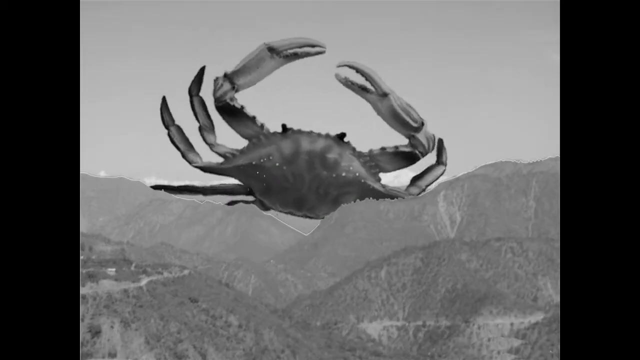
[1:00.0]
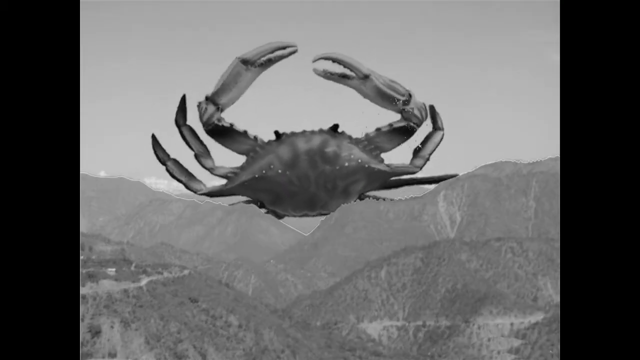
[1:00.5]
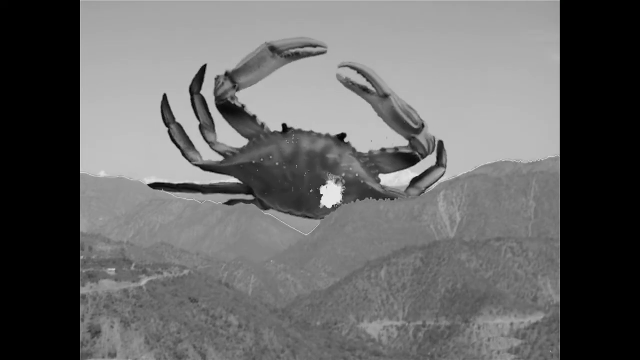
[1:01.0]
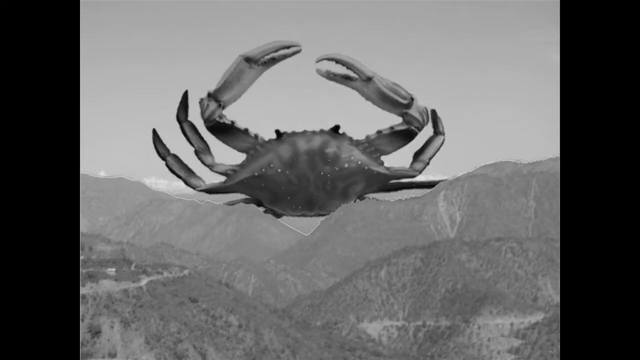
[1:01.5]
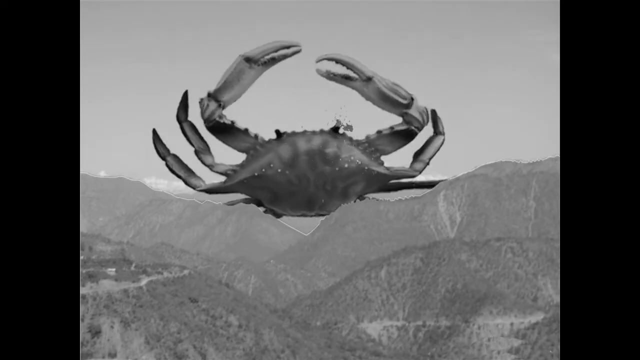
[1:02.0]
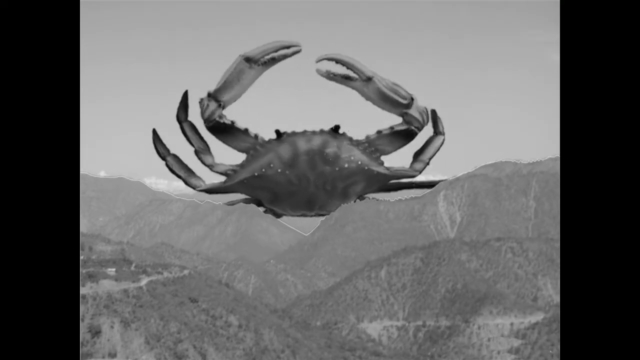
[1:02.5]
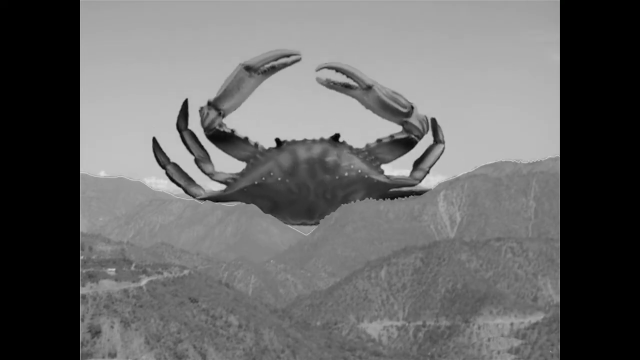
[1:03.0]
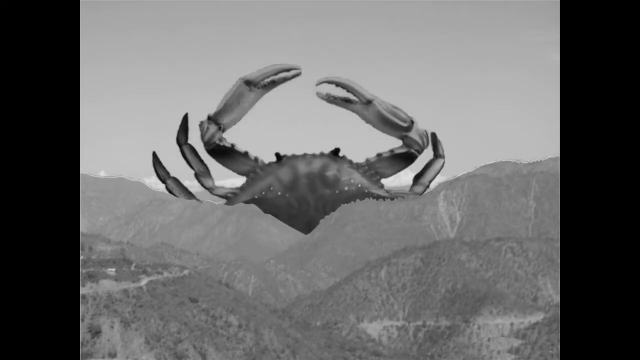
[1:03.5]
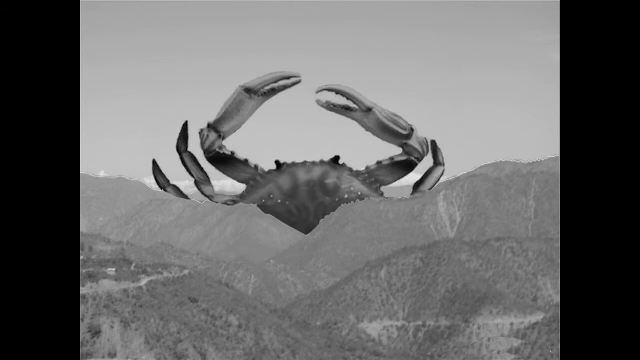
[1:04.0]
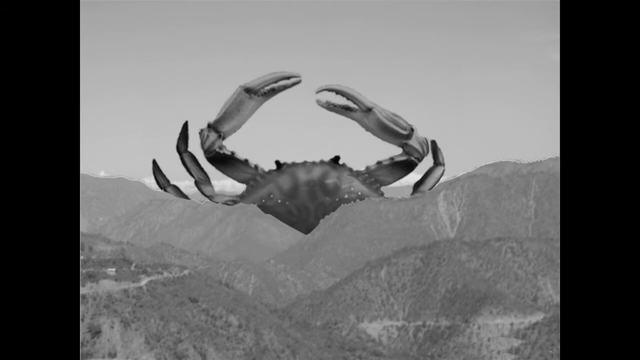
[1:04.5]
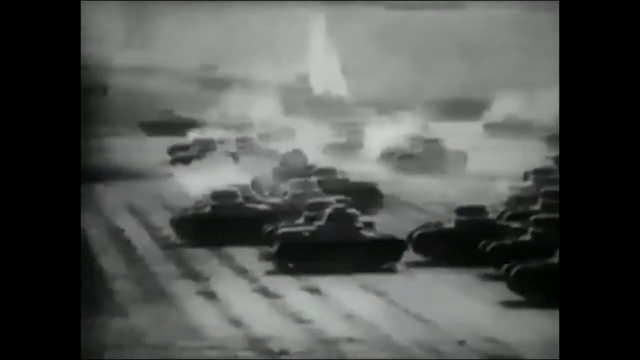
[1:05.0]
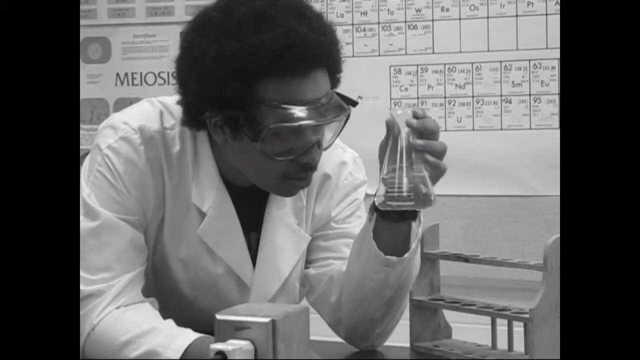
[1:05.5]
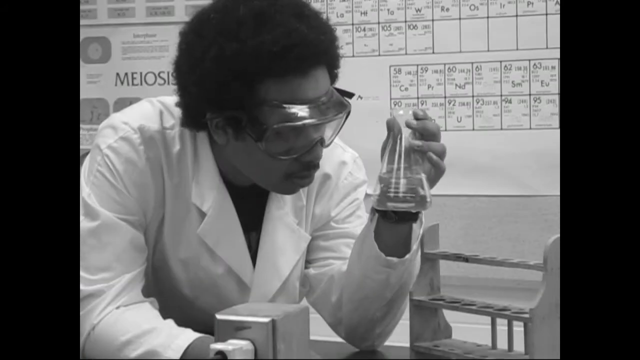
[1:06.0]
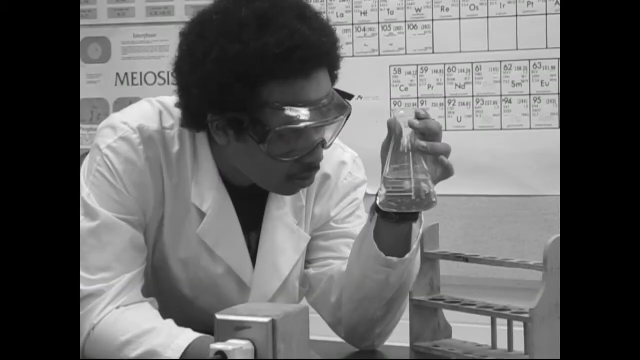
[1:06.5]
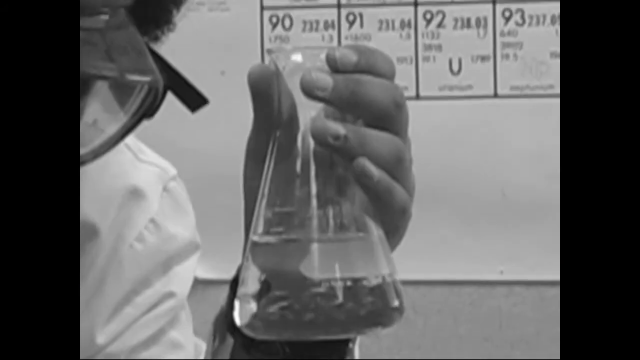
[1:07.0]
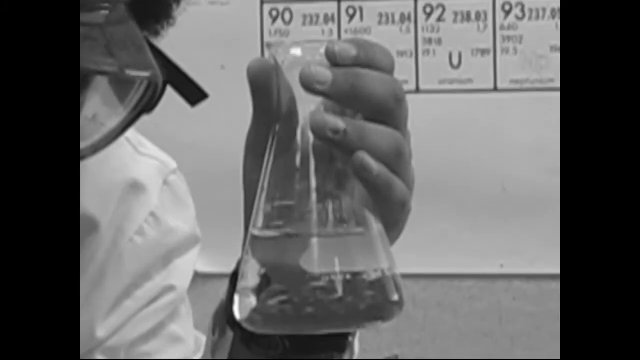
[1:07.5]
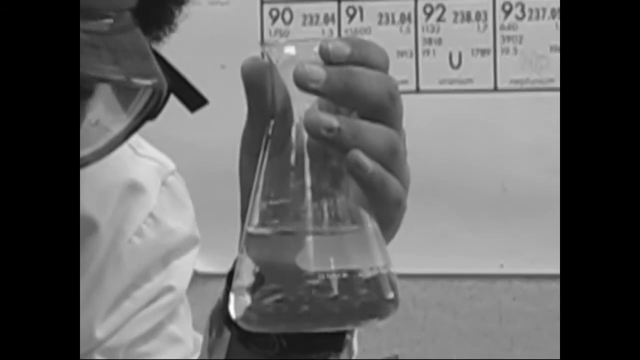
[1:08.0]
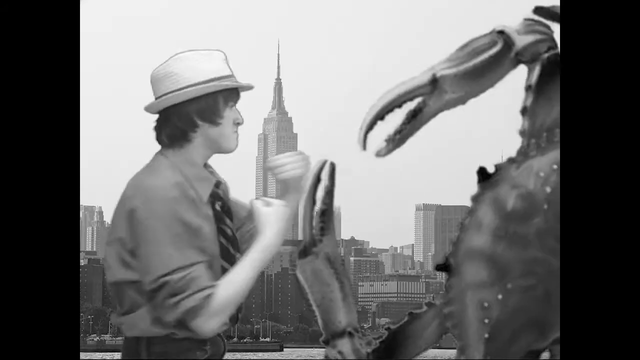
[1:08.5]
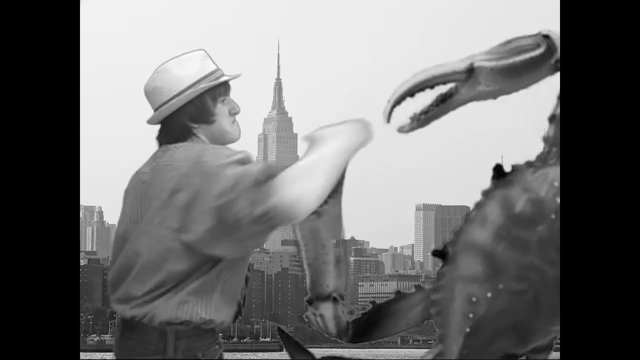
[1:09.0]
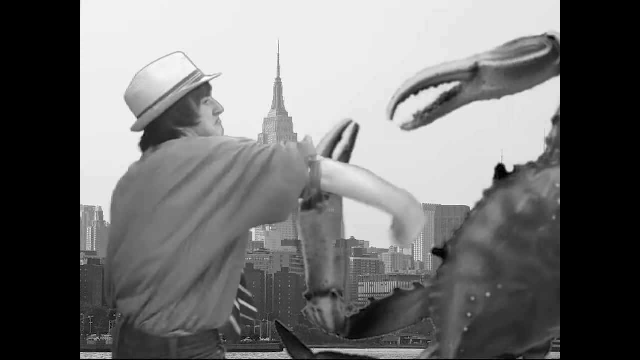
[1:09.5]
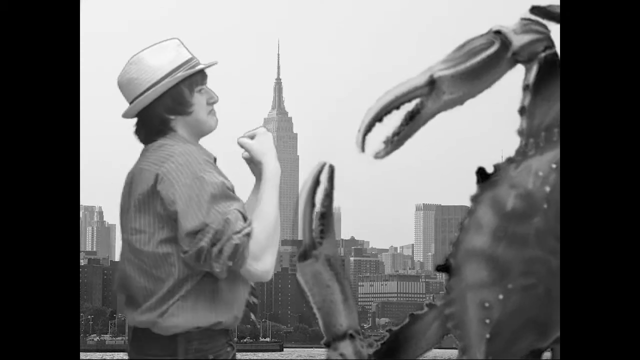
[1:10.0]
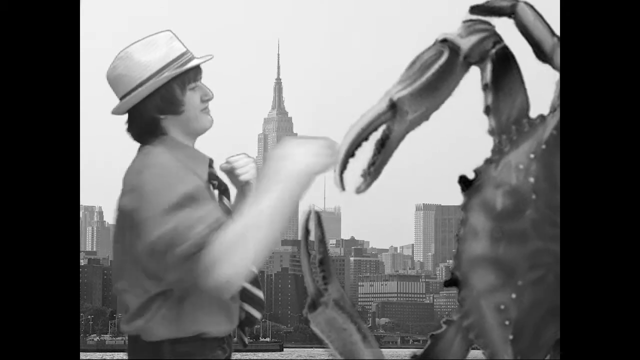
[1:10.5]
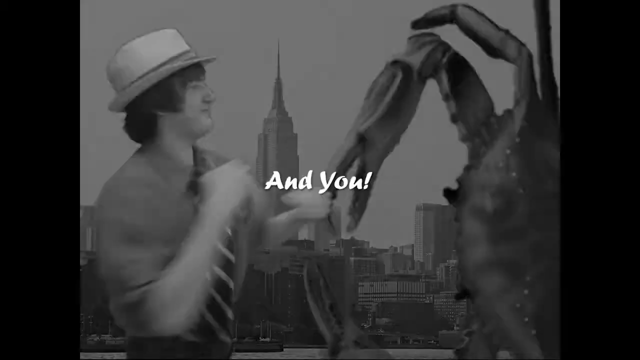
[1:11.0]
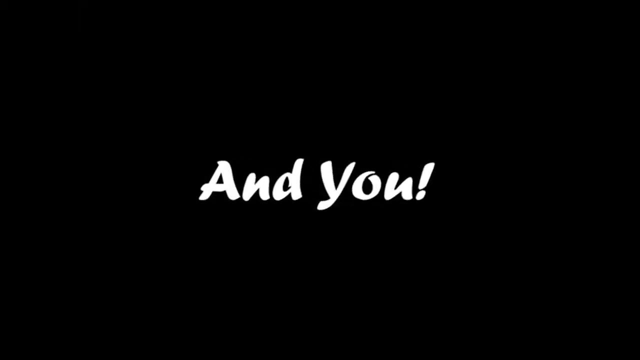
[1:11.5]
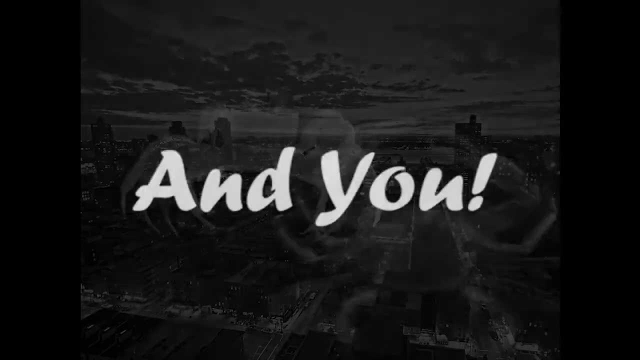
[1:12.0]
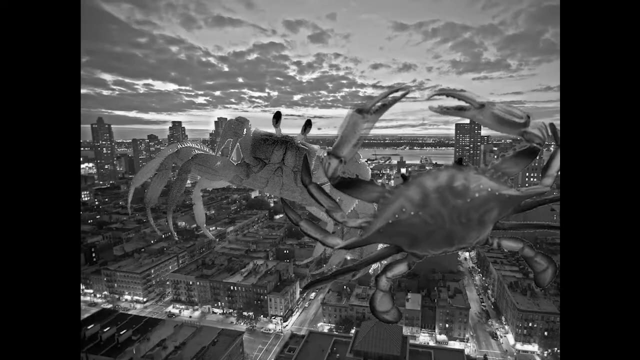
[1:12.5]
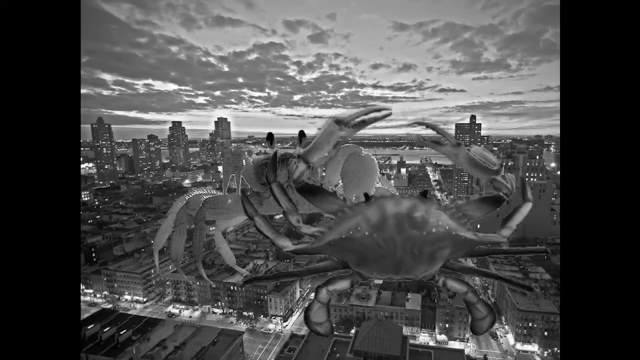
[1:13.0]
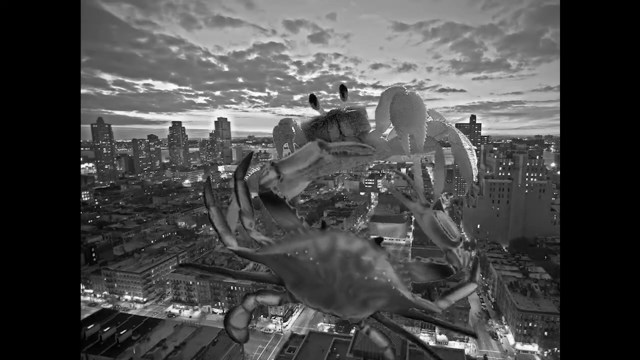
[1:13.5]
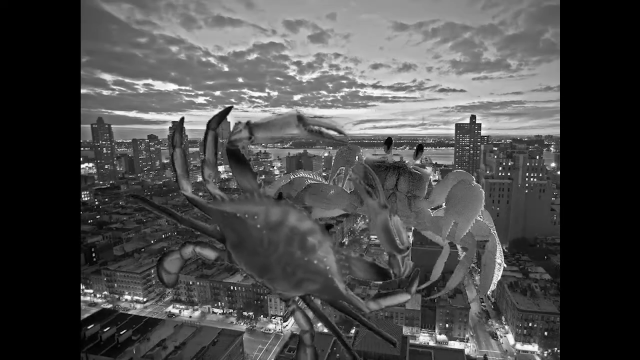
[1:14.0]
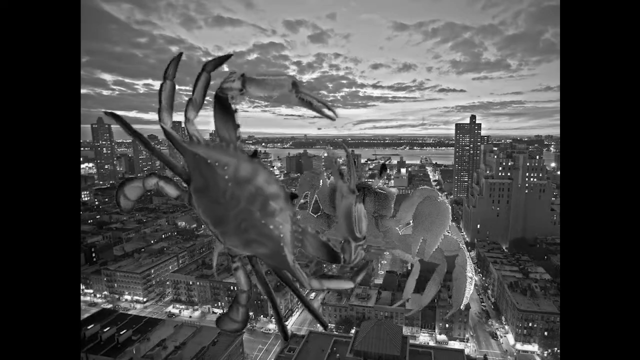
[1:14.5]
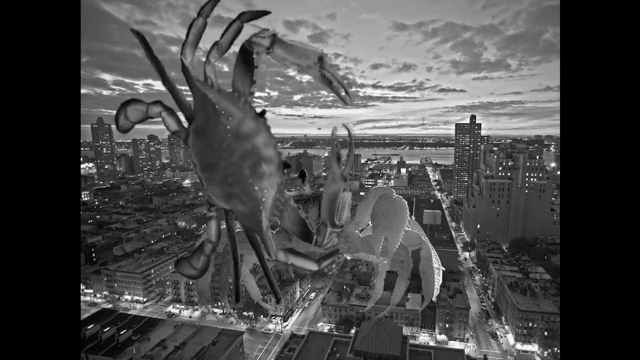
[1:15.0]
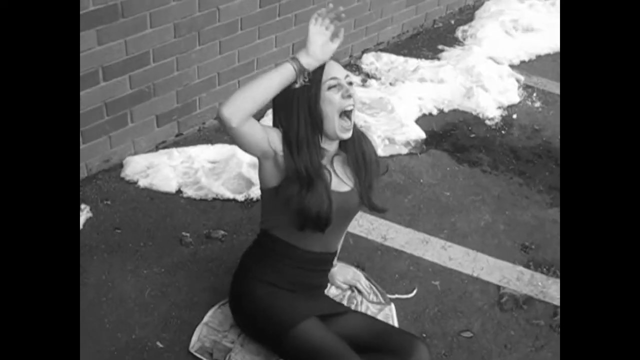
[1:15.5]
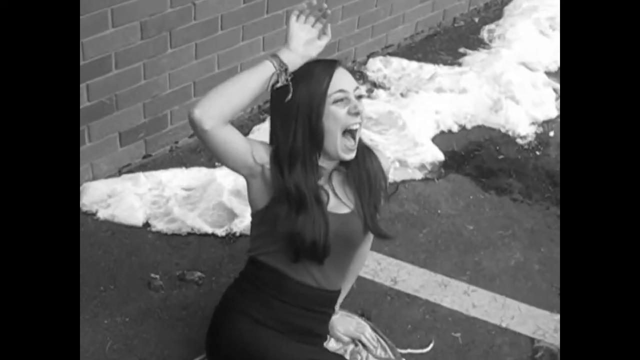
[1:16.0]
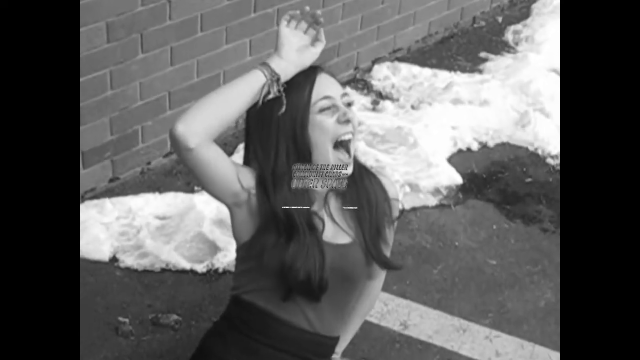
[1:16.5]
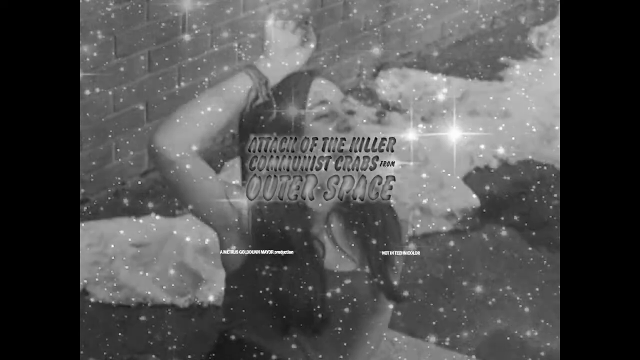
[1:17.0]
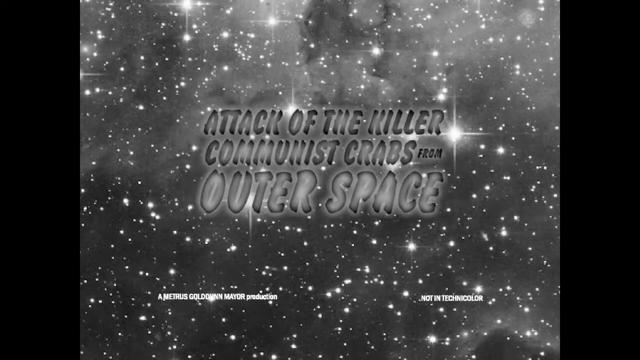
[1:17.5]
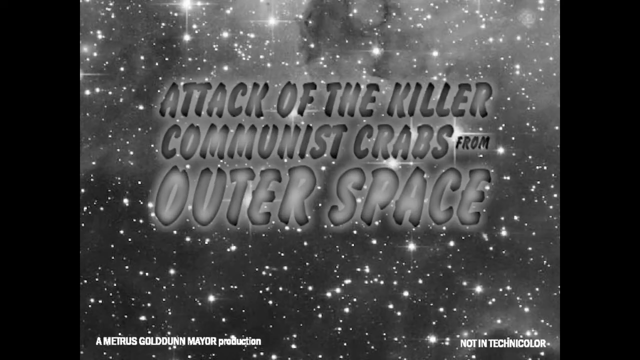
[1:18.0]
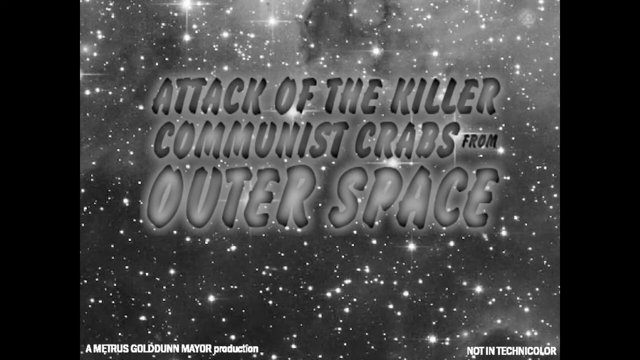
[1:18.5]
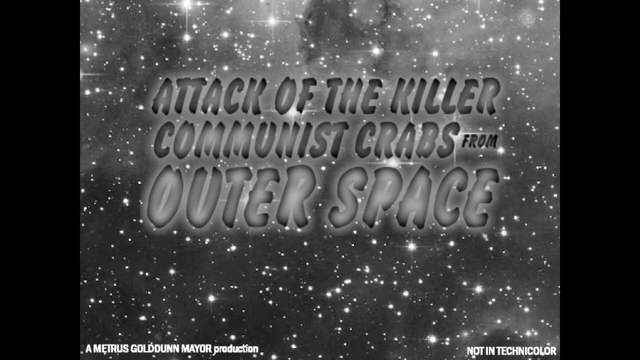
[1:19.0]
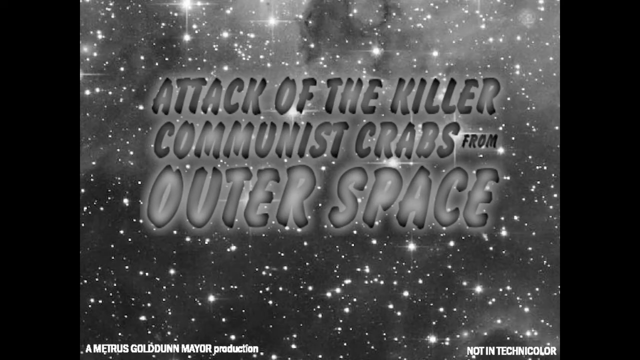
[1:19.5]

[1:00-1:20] The crab comes up from behind the mountains as shots are fired at it, hitting its shell. The scene changes to tanks and military-type vehicles traveling quickly down the street. Next is what looks like a science laboratory, where a male wearing goggles holds a beaker with liquid inside; behind him on the wall is something like an element chart or periodic table. The scene switches to the city in the background with the large crab, and the boy in the hat, the main character of these scenes, throws boxing-style punches at the crab. In the city scene, two crabs look like they are getting ready to battle each other. A female sitting on the ground begins screaming. Then a title appears: "Attack of the killer communist crabs from outer space."